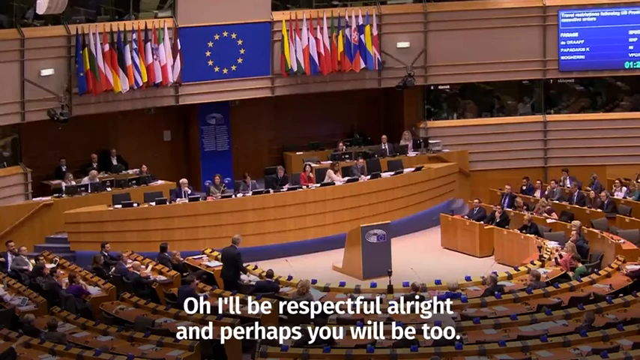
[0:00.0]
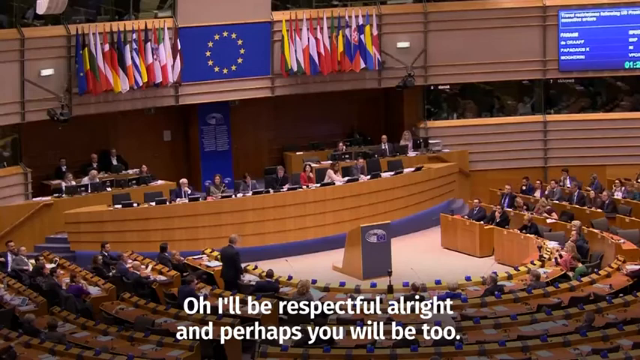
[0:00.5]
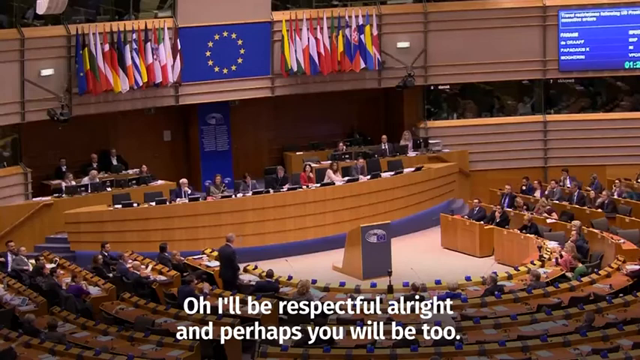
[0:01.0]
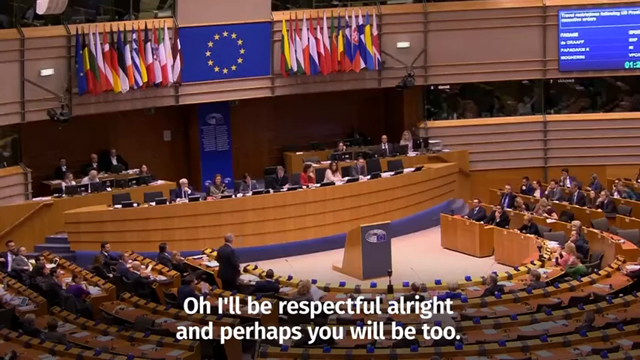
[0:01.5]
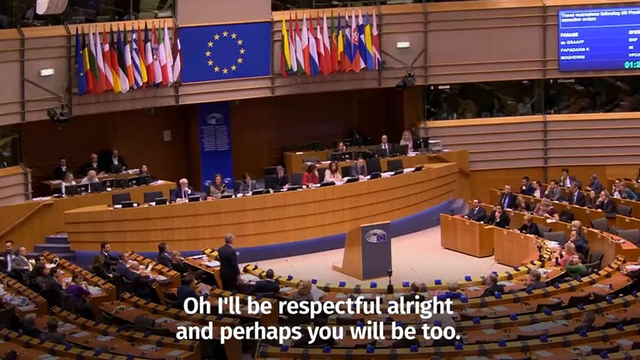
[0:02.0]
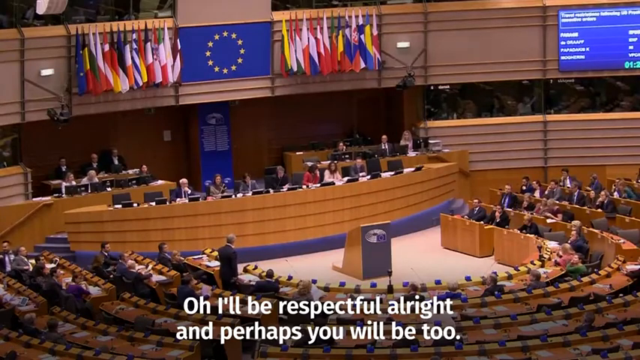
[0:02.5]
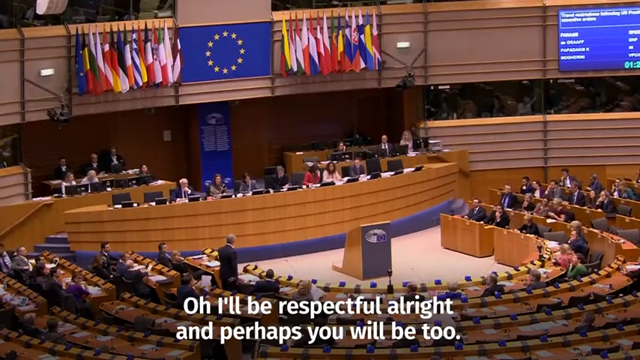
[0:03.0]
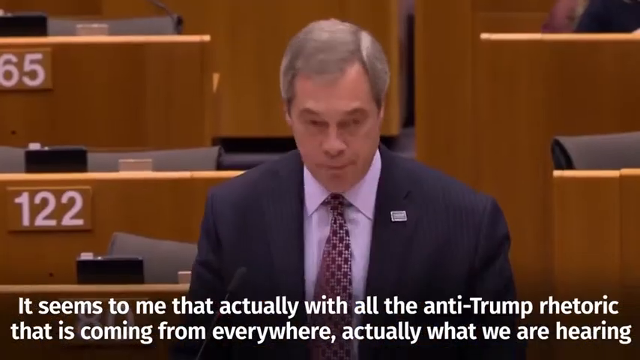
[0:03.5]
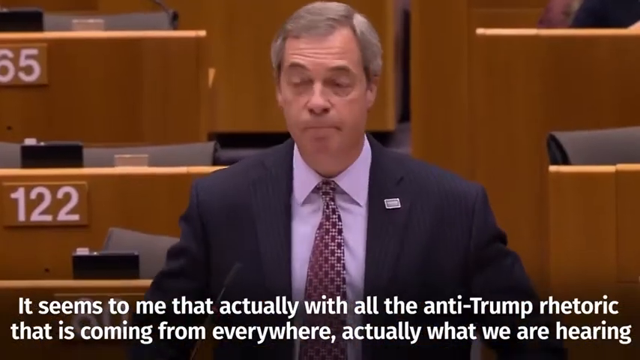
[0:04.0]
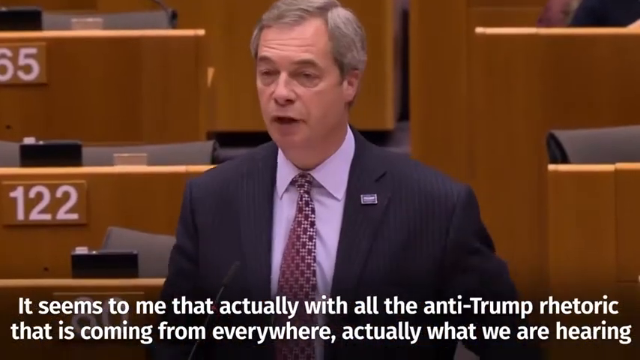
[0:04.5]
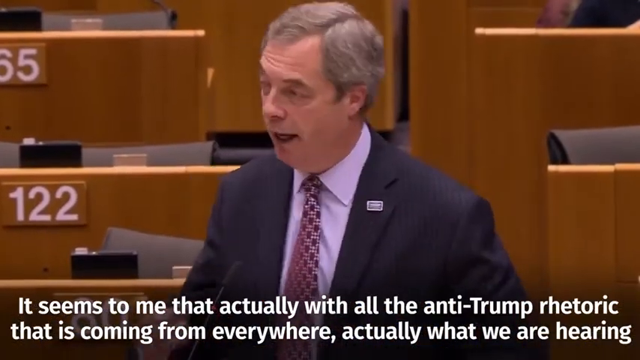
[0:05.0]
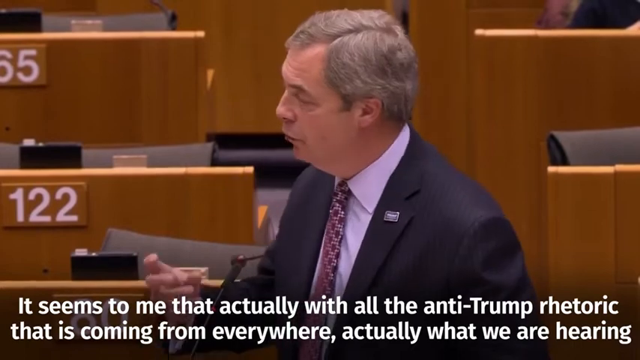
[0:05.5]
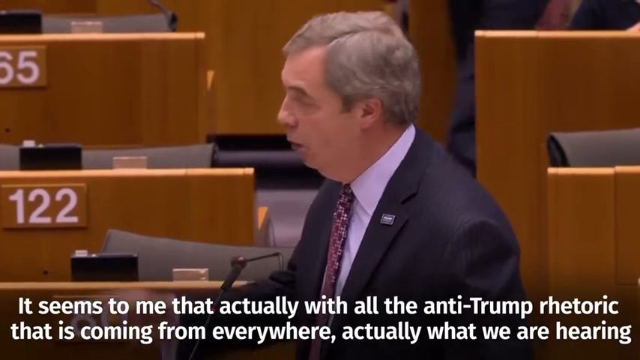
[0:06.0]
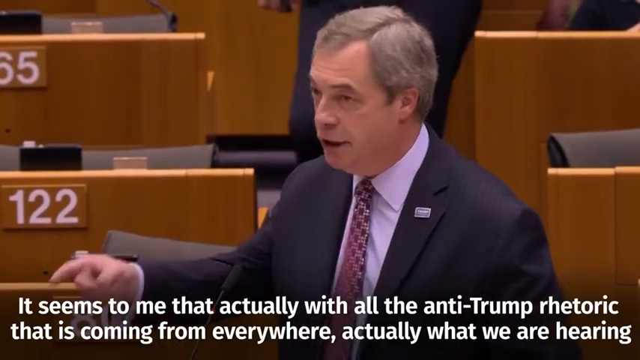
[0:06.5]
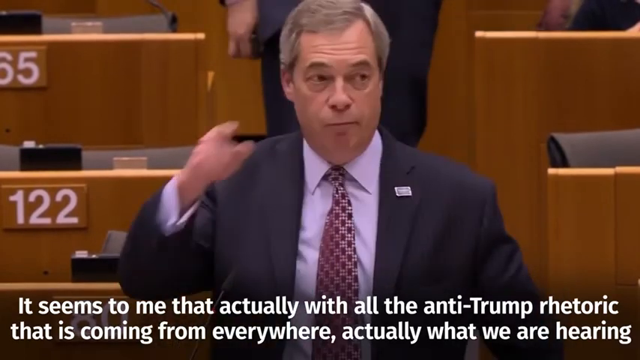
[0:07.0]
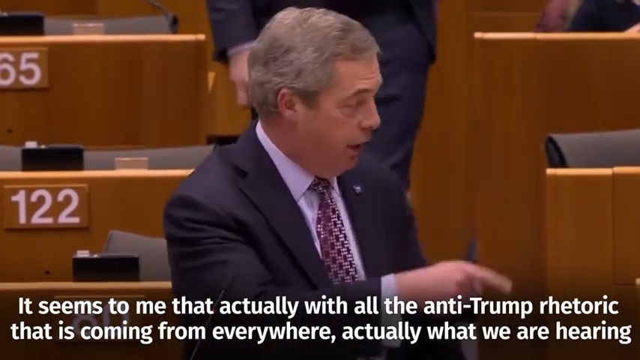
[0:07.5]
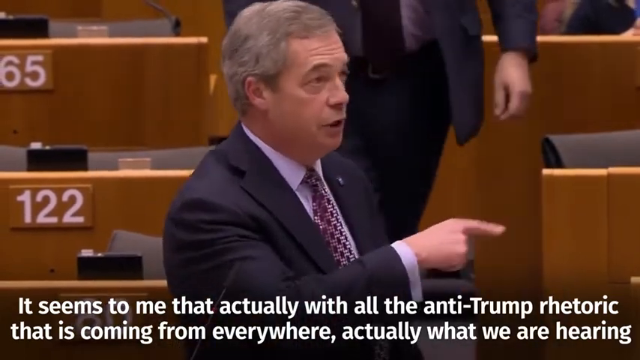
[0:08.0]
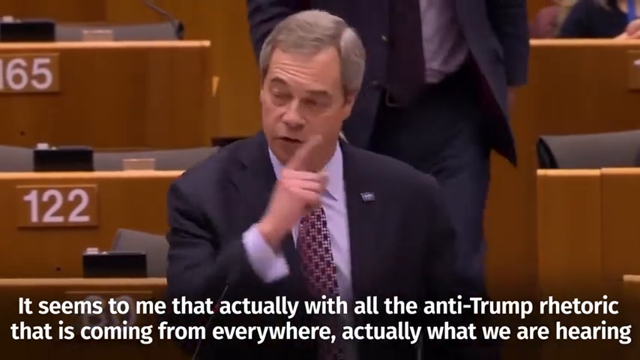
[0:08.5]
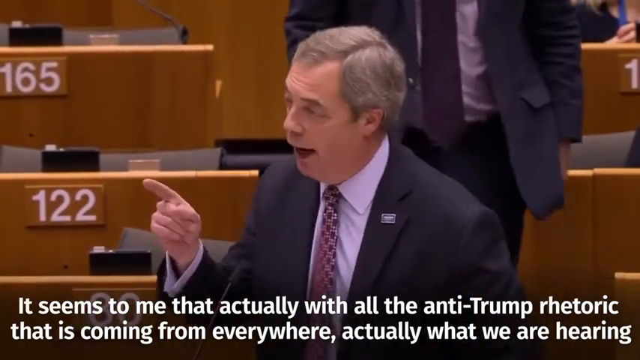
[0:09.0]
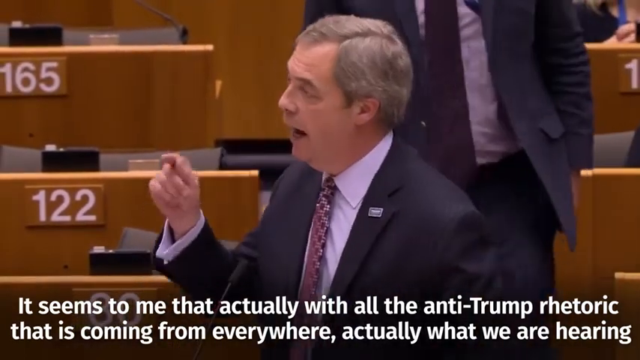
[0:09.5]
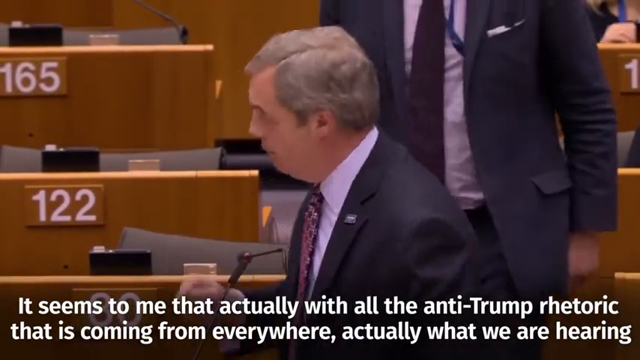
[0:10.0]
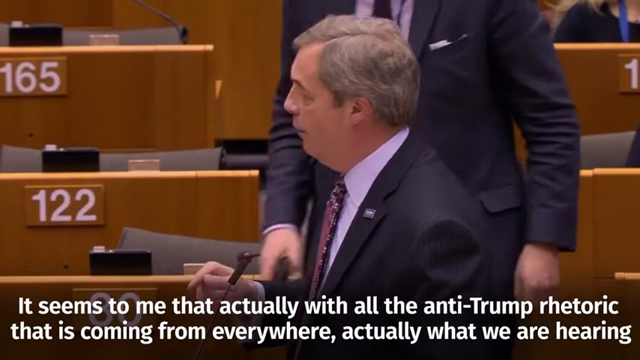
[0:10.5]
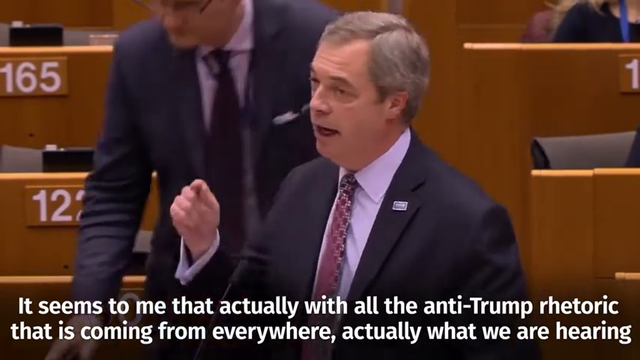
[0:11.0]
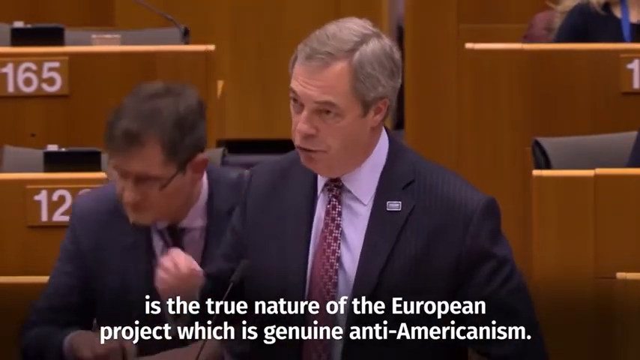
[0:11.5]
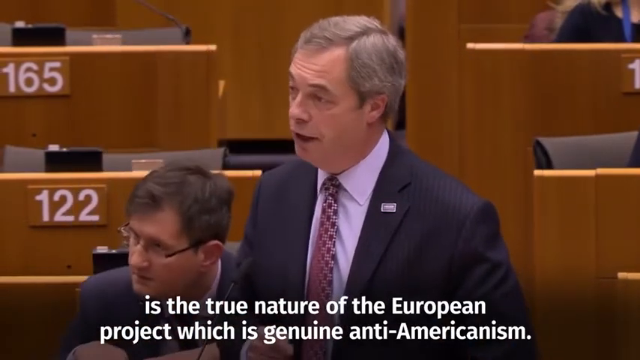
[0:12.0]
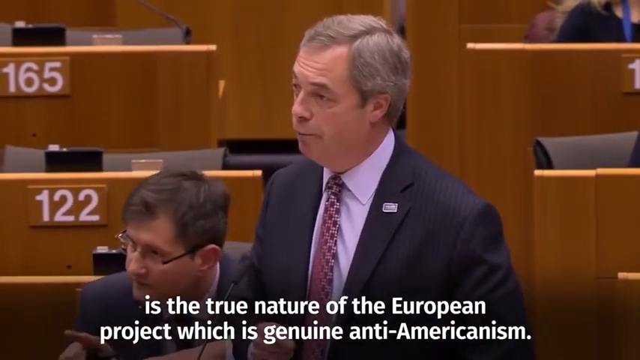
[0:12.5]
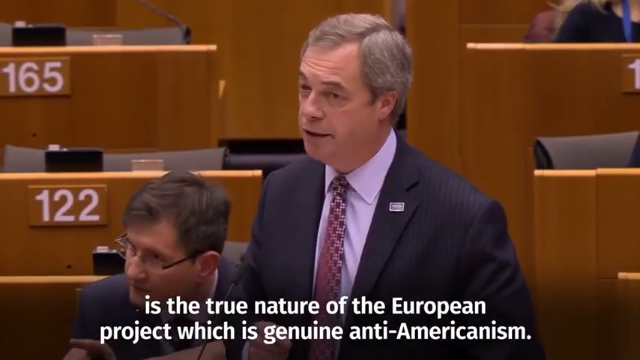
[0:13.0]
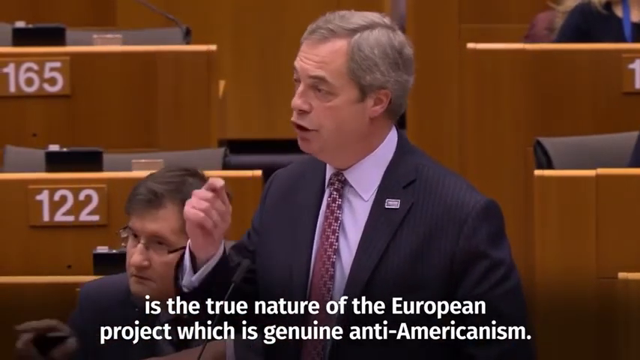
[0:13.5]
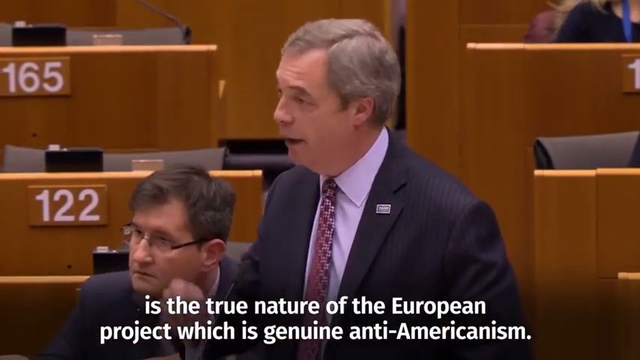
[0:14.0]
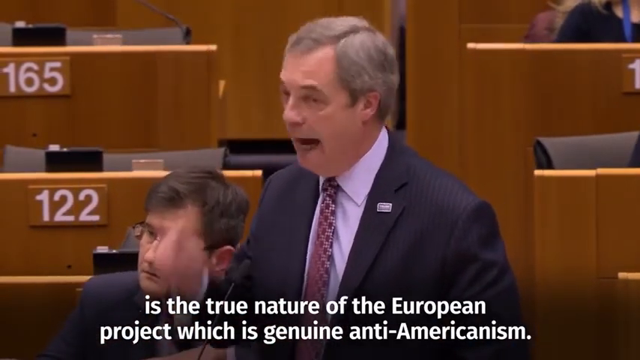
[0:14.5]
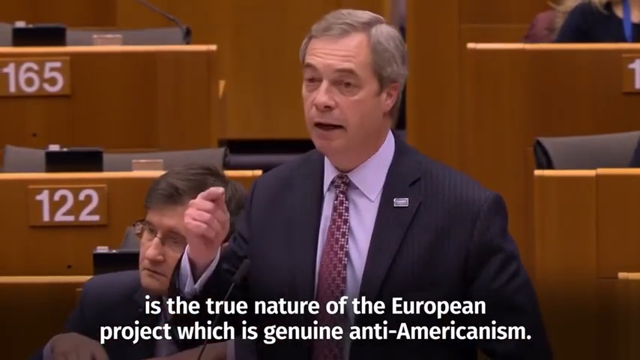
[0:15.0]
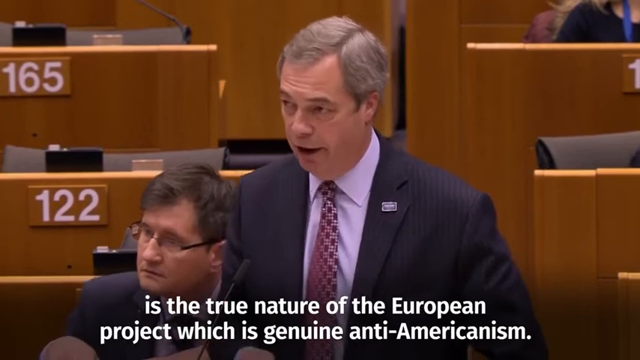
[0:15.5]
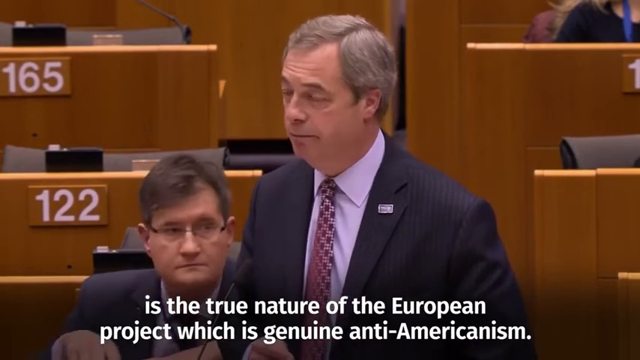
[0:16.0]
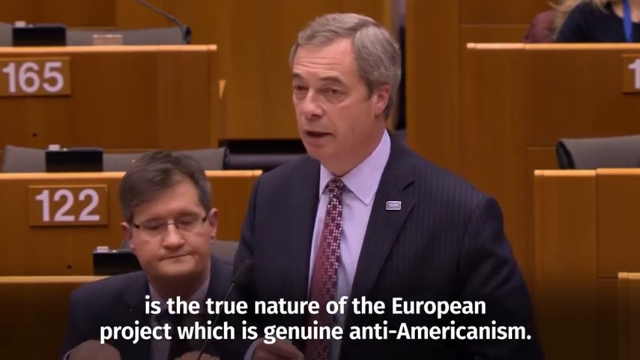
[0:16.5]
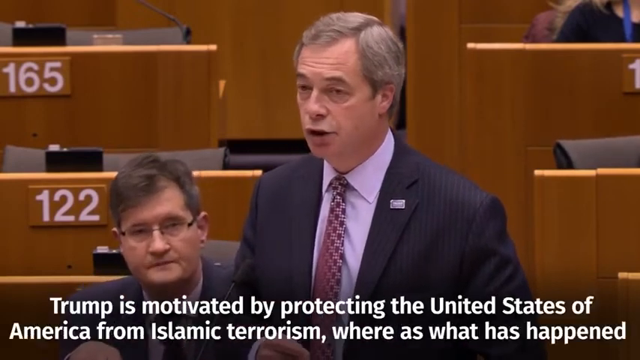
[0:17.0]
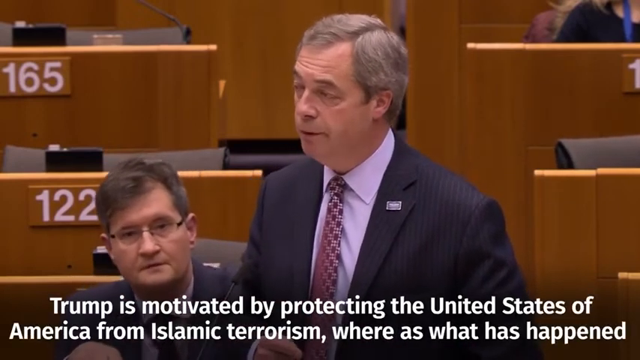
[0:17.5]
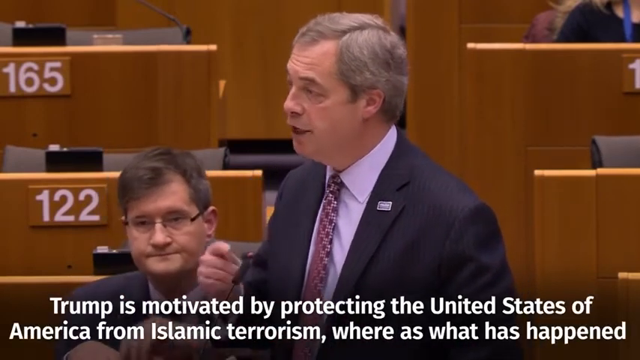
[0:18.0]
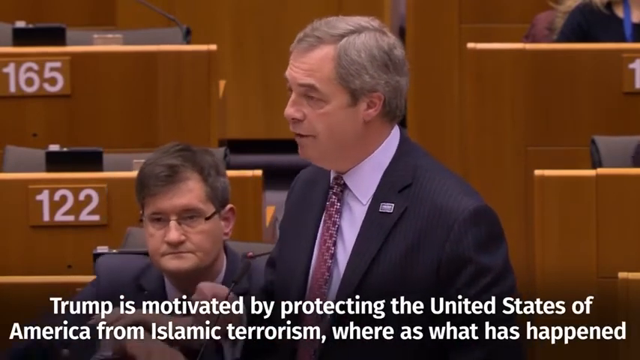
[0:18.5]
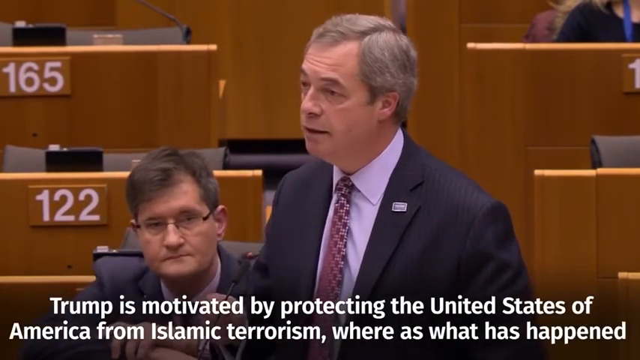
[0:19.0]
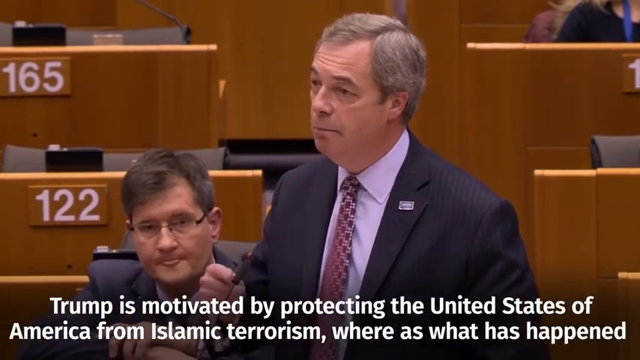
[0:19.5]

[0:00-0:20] A man wearing a black suit gives a speech in a government room, with people in the background sitting, watching and listening. Different colors are visible in the background.